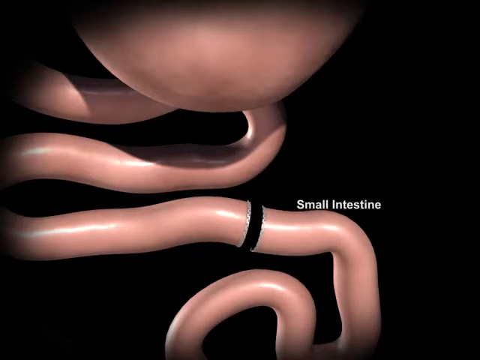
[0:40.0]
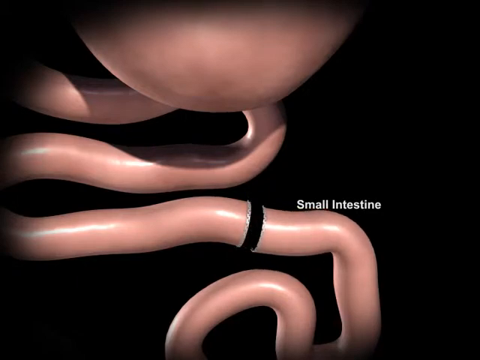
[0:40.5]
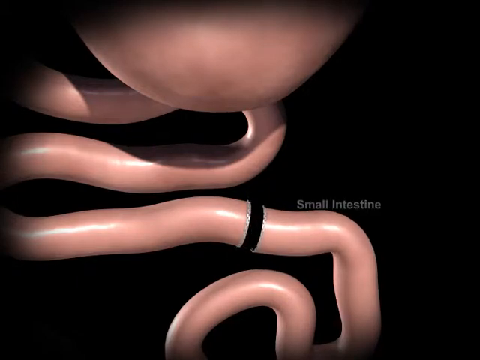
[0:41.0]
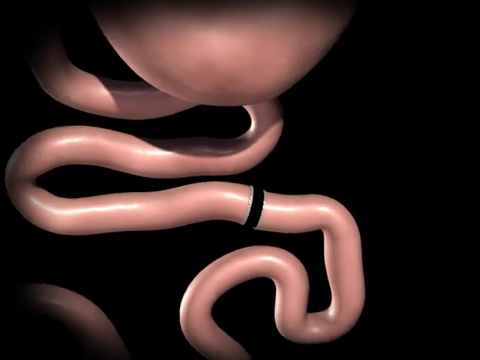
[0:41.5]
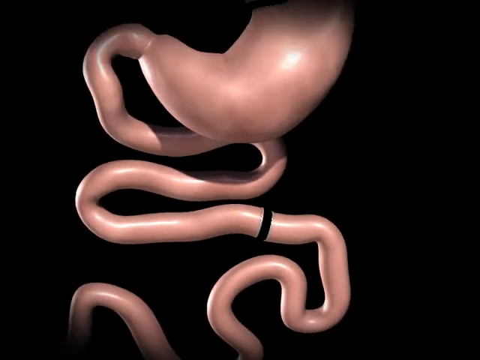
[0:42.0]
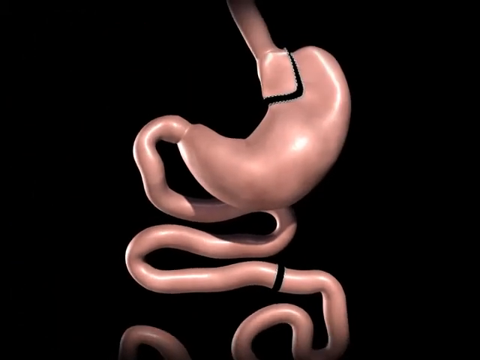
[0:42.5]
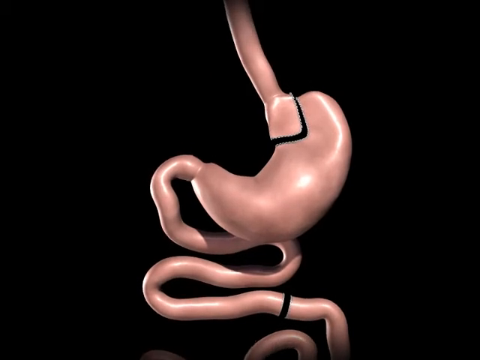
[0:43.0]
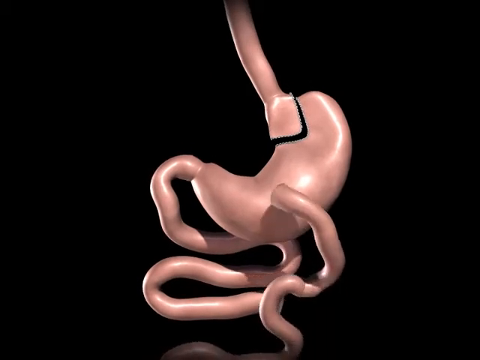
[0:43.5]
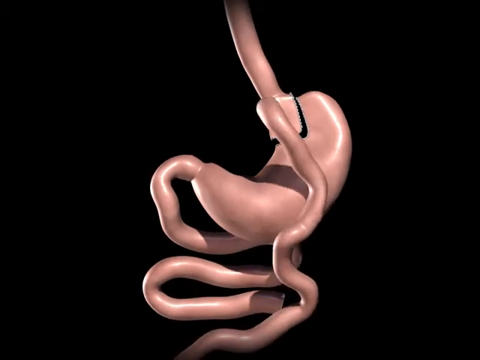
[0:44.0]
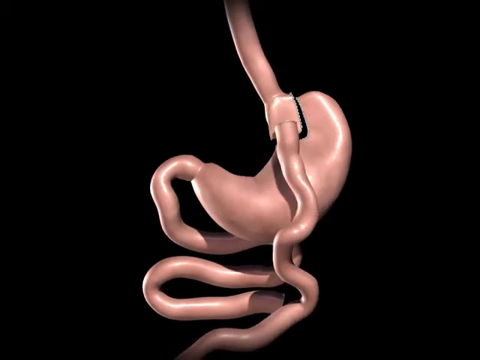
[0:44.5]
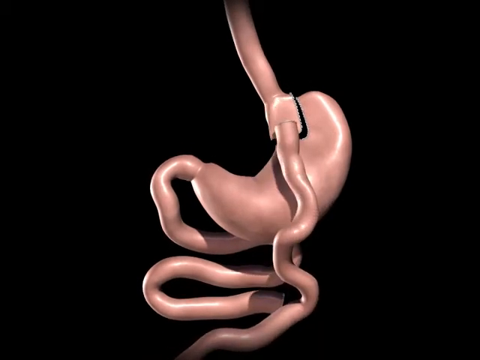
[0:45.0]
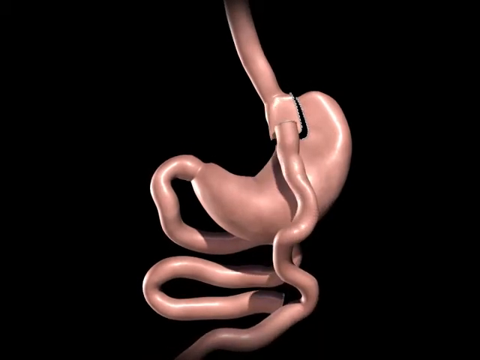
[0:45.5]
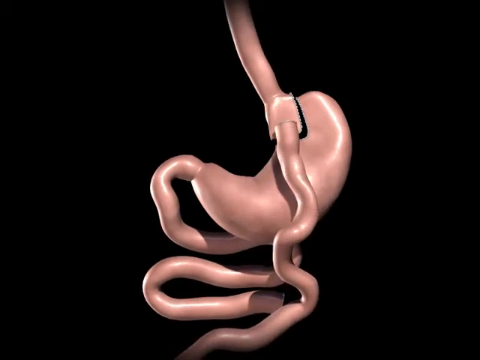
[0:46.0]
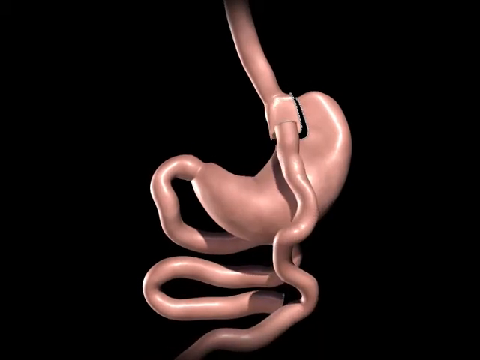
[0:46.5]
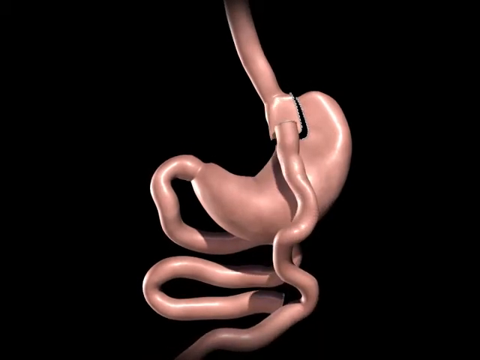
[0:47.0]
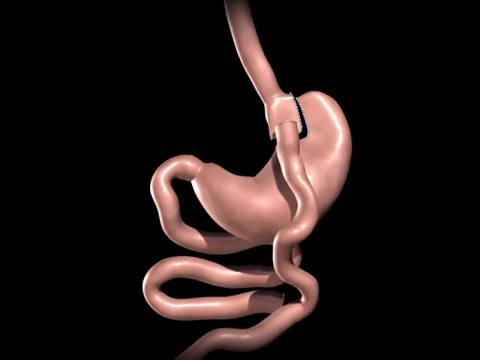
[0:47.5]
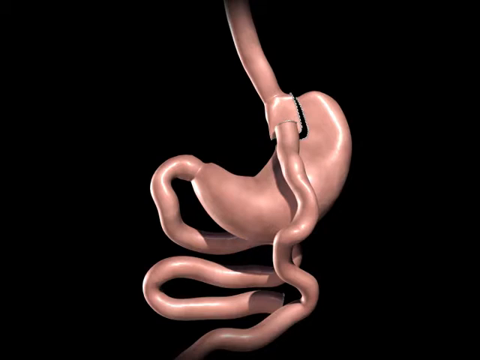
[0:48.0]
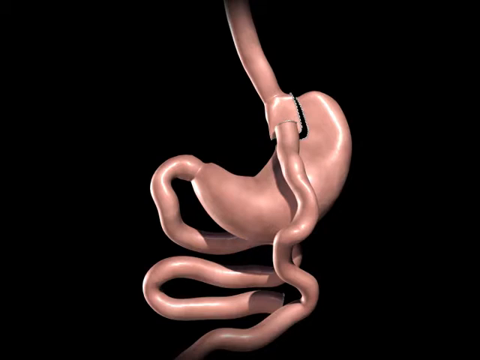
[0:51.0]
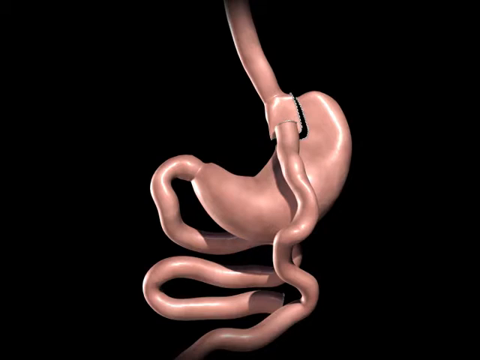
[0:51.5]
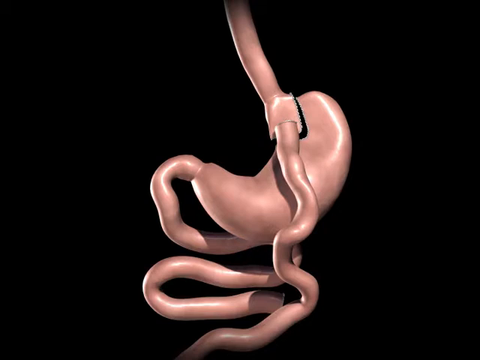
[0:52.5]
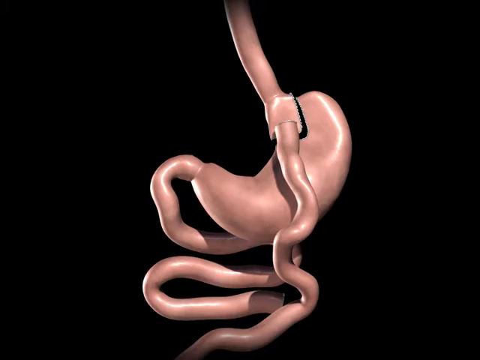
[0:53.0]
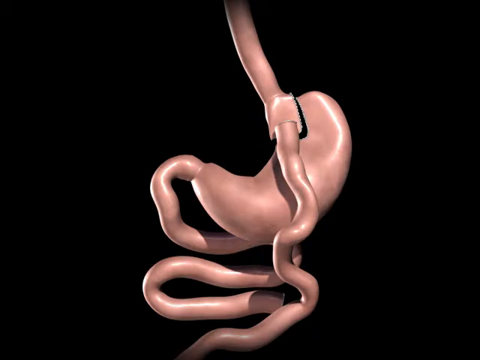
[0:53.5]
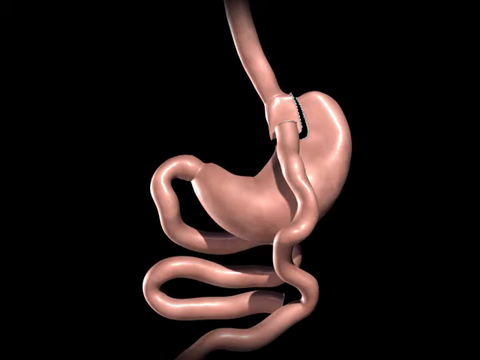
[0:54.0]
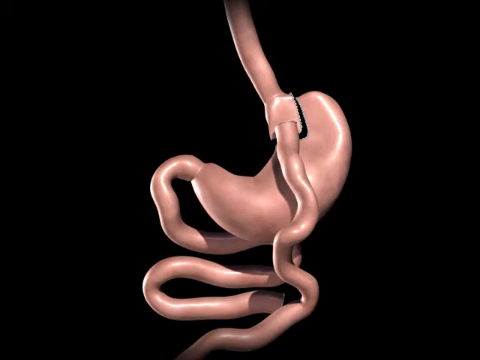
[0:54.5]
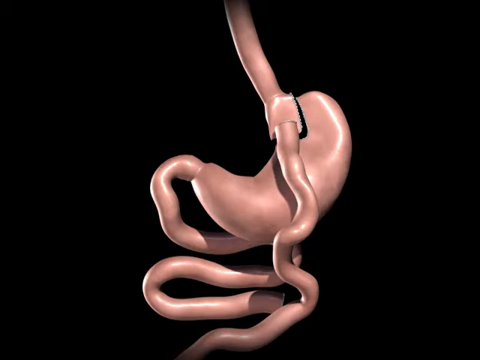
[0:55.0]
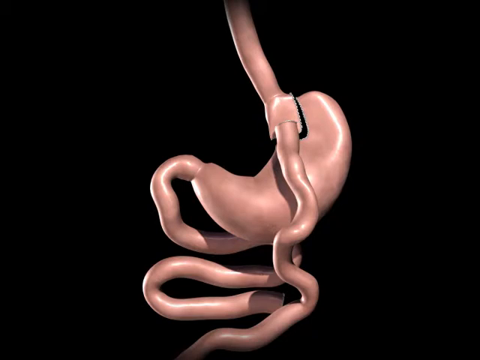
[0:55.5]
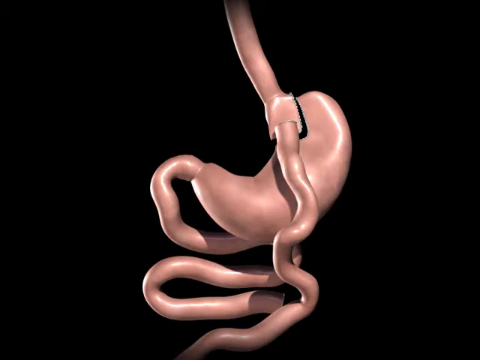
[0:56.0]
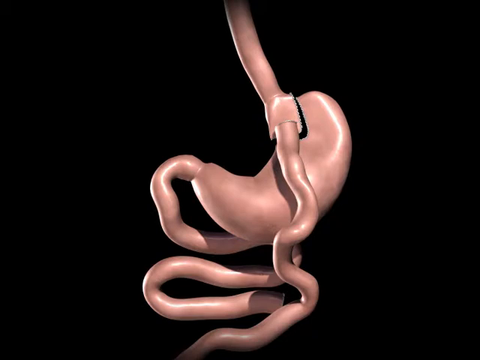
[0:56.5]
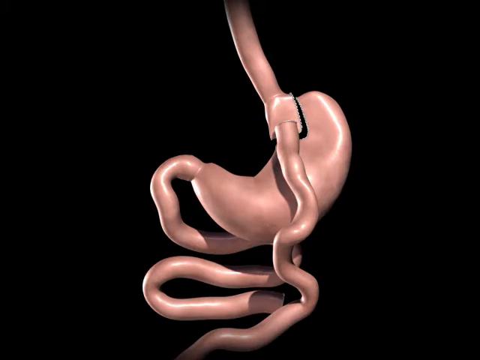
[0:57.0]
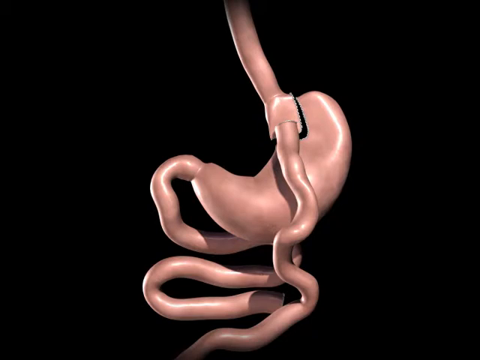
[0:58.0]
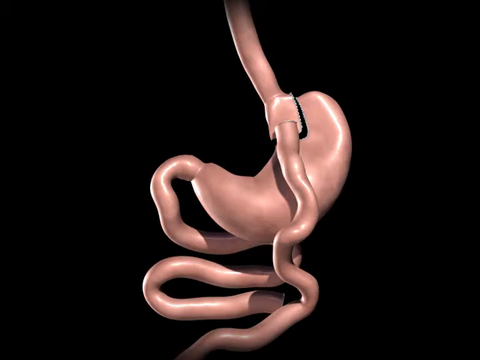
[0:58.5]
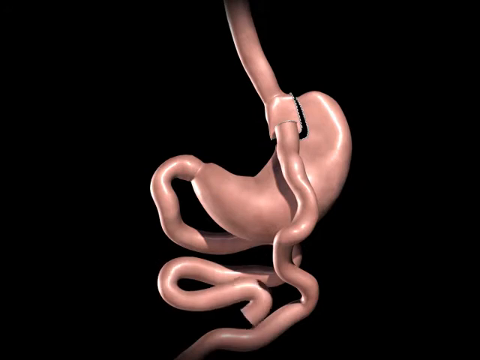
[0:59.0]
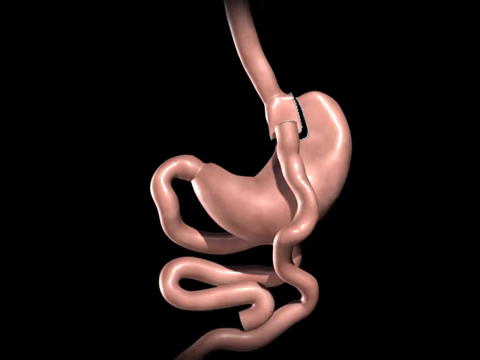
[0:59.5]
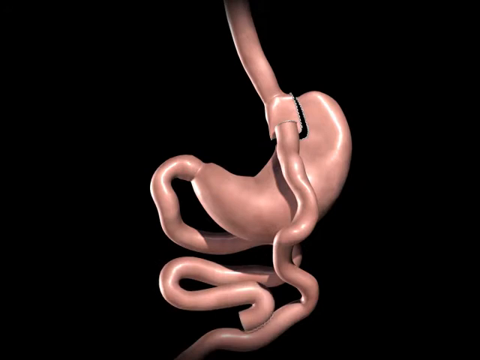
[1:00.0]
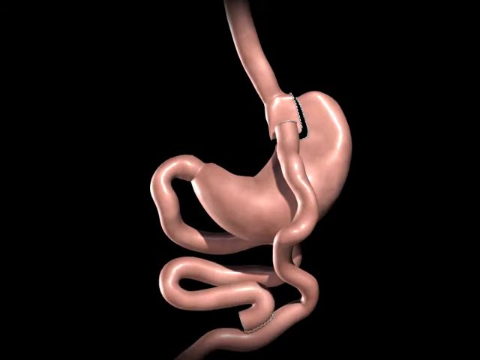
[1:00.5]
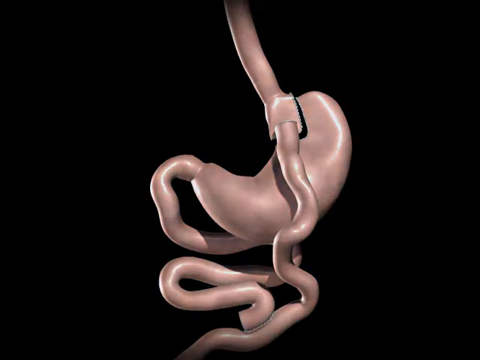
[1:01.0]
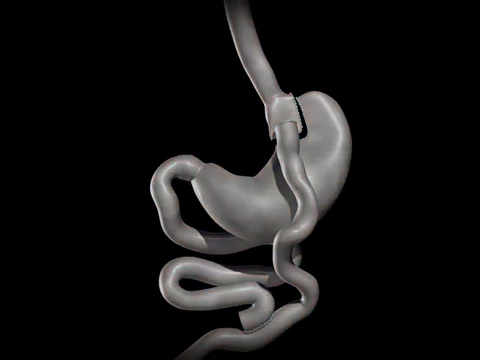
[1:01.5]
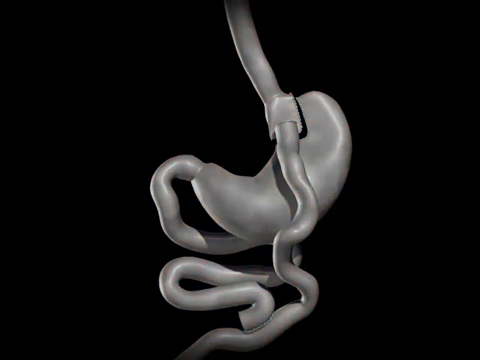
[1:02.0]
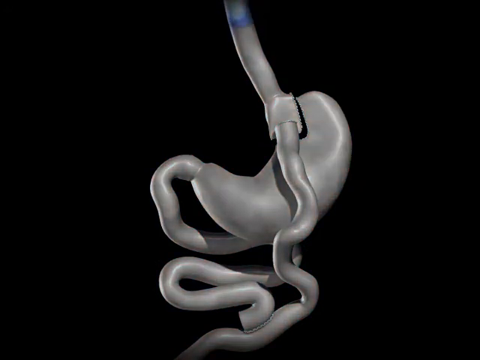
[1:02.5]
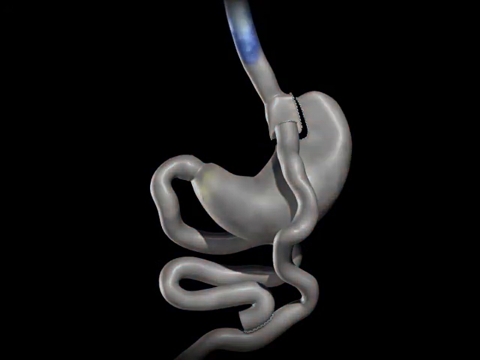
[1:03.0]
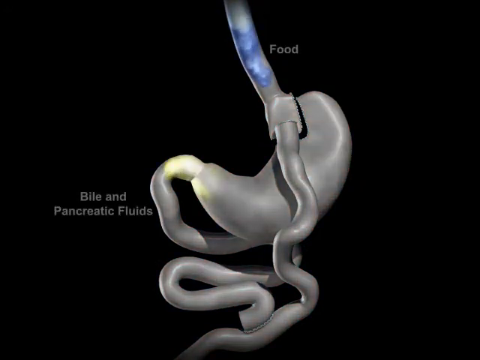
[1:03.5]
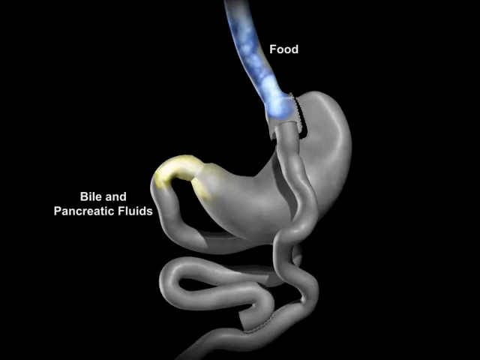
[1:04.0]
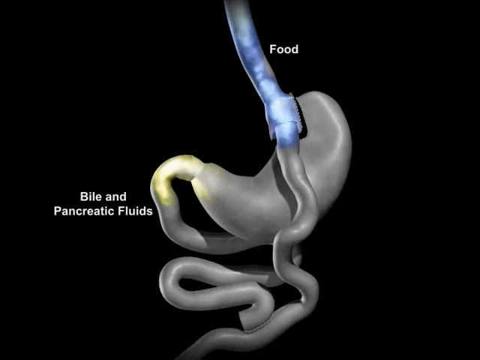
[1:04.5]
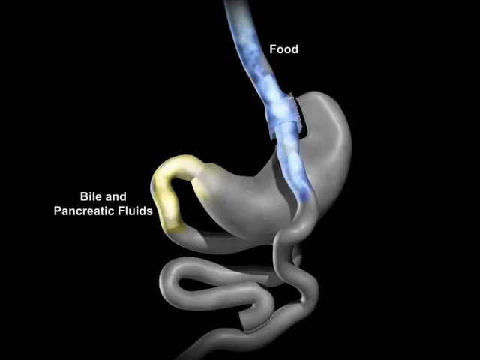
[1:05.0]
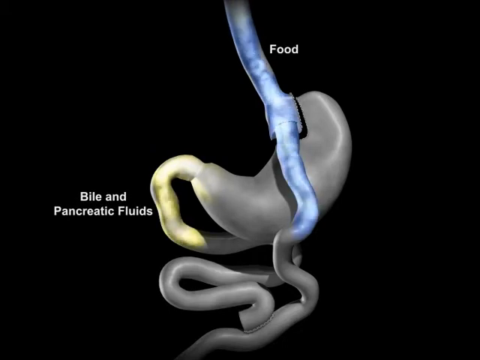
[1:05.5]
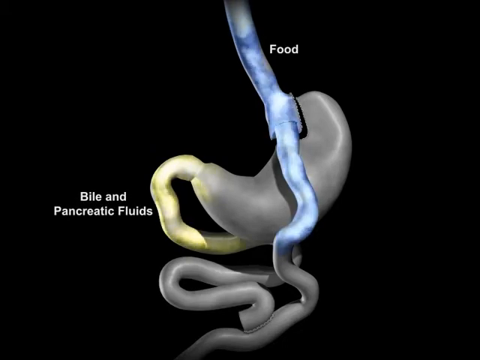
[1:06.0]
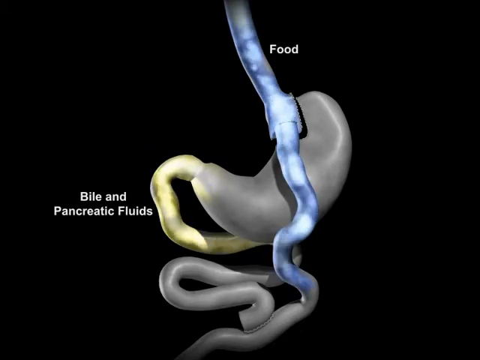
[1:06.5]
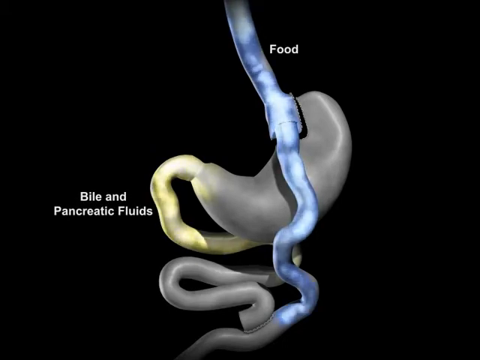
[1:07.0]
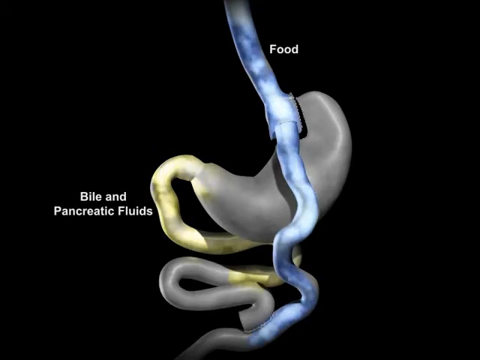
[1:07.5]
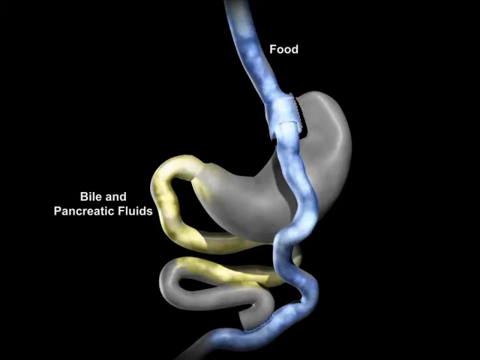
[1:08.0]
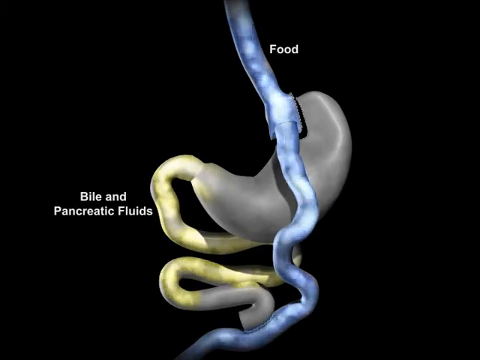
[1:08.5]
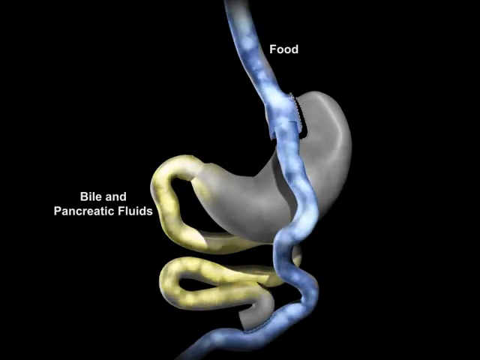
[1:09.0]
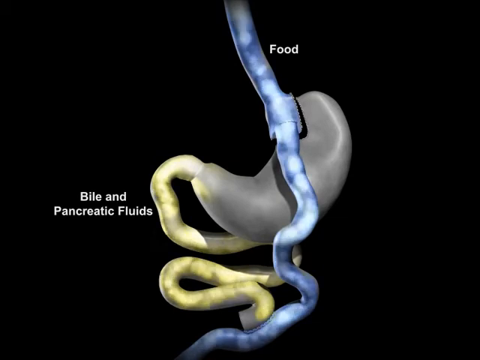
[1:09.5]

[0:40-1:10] The gastric bypass operation animation continues on a sort of black screen: the small intestine is kind of cut and the upper stomach is cut, and the small intestine is moved to where the upper stomach is, effectively removing a large portion of the stomach. It then shows the small intestine and some sort of food, bile and pancreas fluids and how they flow through the body. No people or animals are shown, and the setting stays on this abdominal screen.